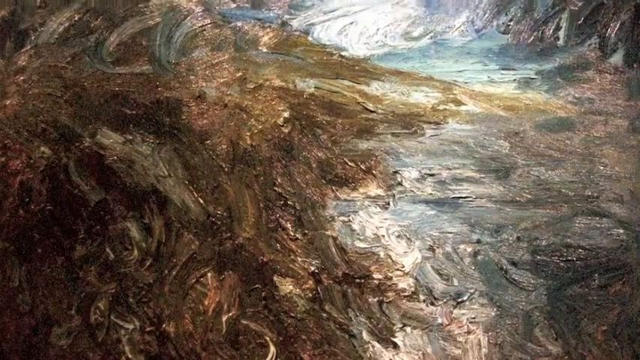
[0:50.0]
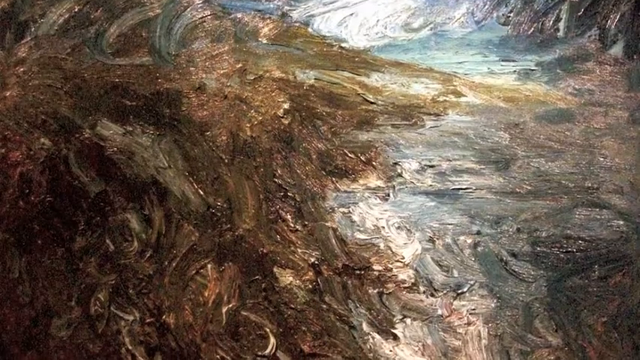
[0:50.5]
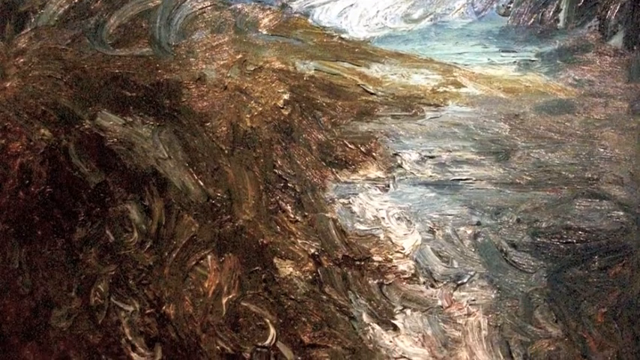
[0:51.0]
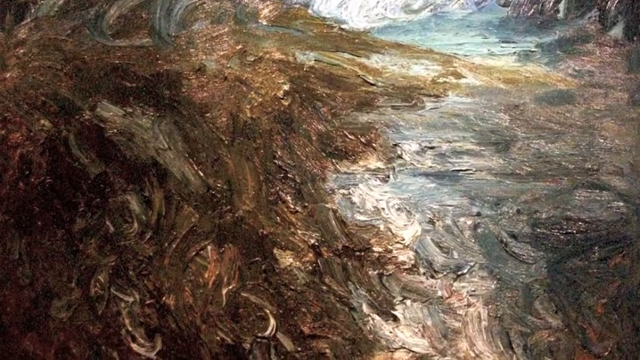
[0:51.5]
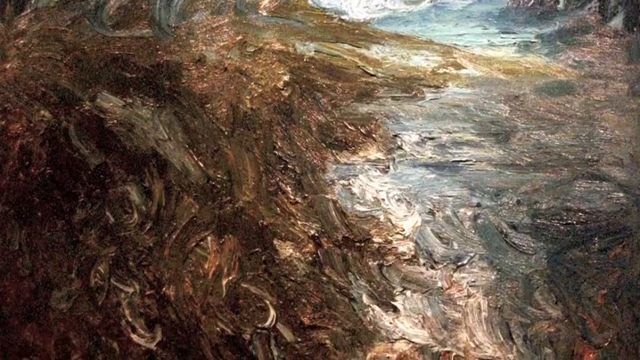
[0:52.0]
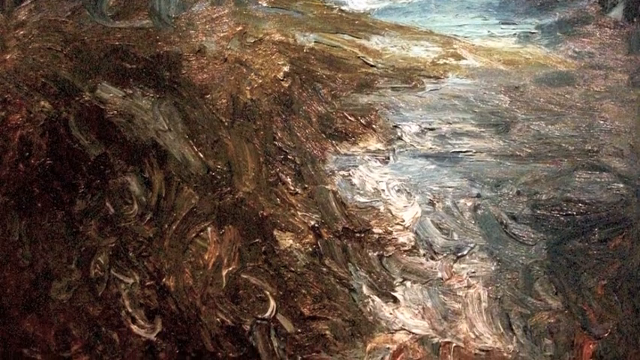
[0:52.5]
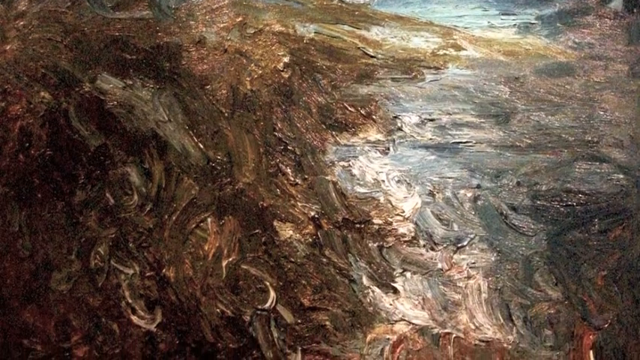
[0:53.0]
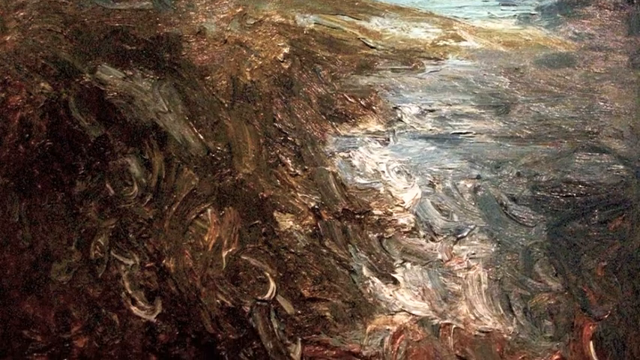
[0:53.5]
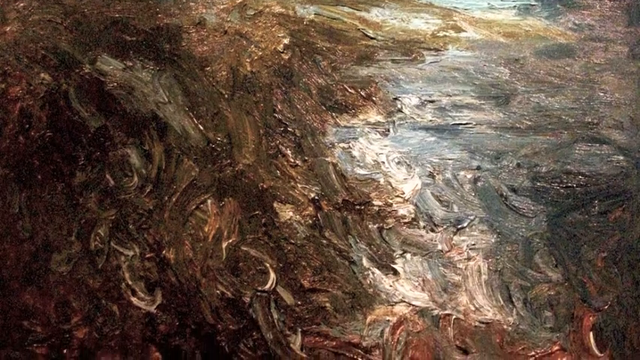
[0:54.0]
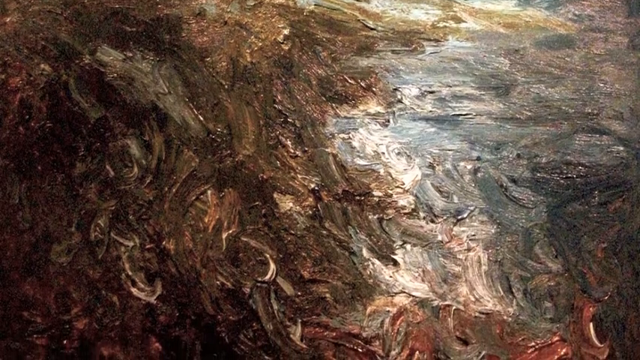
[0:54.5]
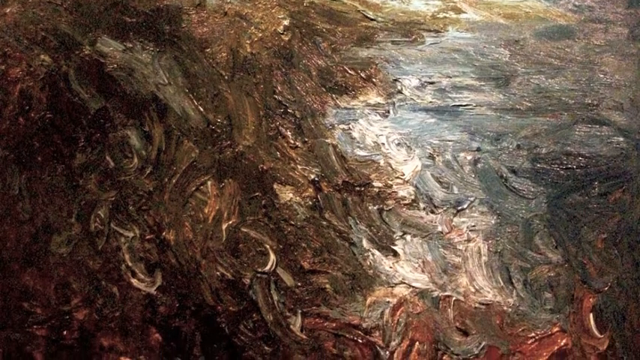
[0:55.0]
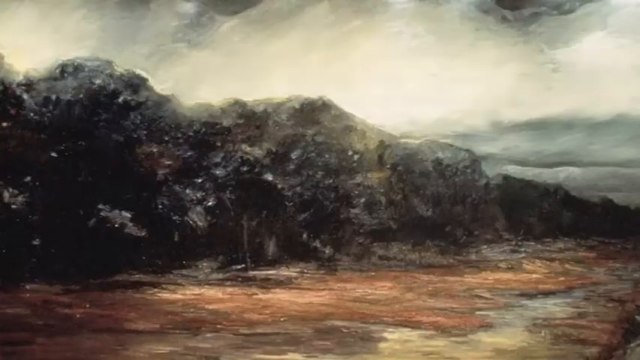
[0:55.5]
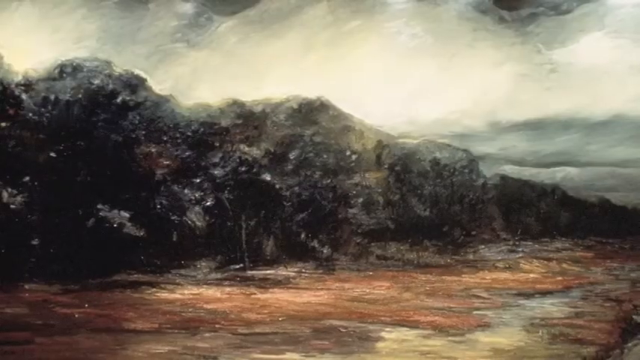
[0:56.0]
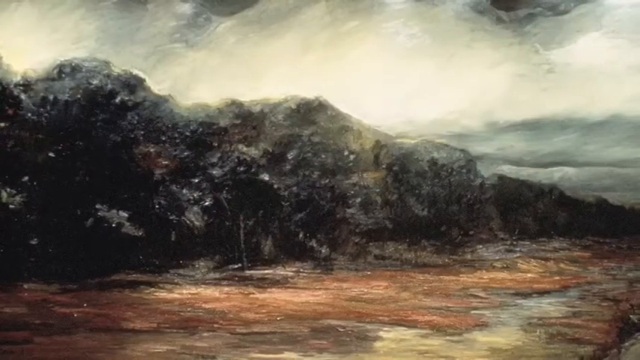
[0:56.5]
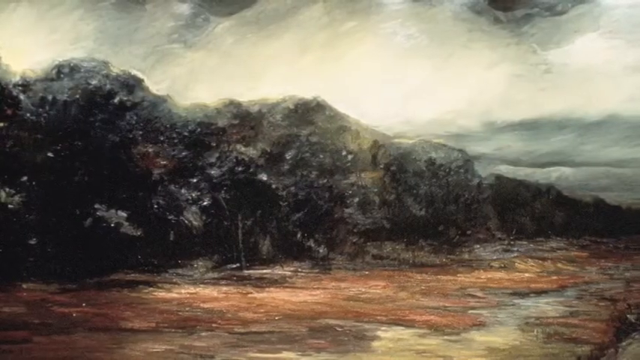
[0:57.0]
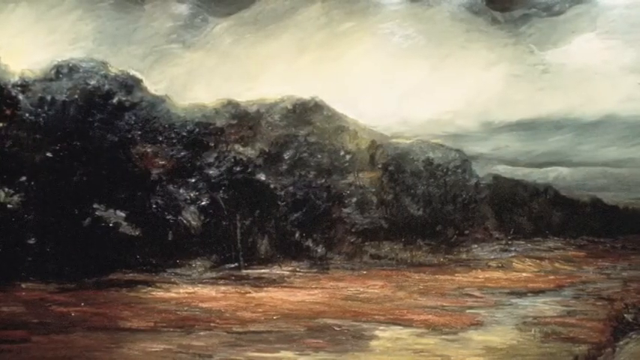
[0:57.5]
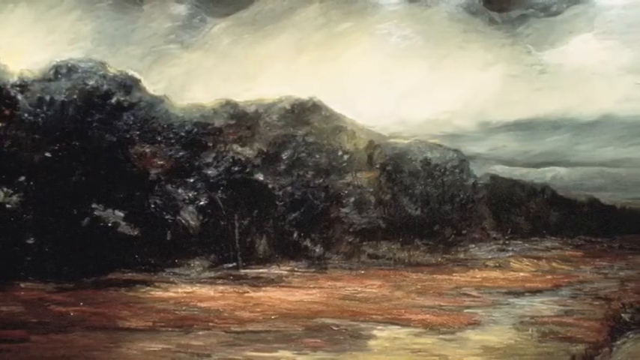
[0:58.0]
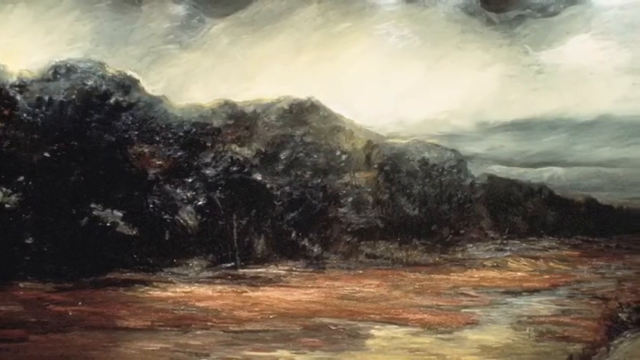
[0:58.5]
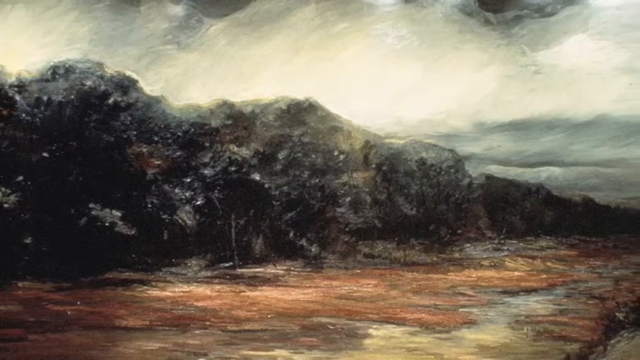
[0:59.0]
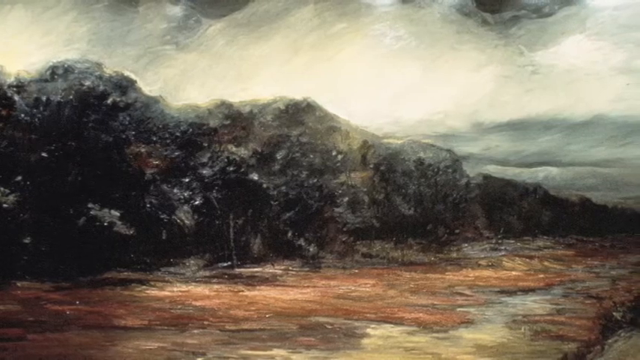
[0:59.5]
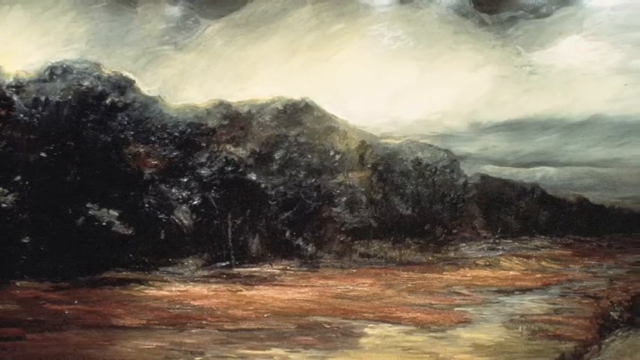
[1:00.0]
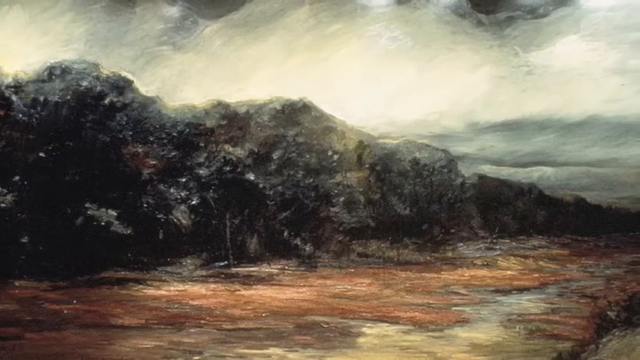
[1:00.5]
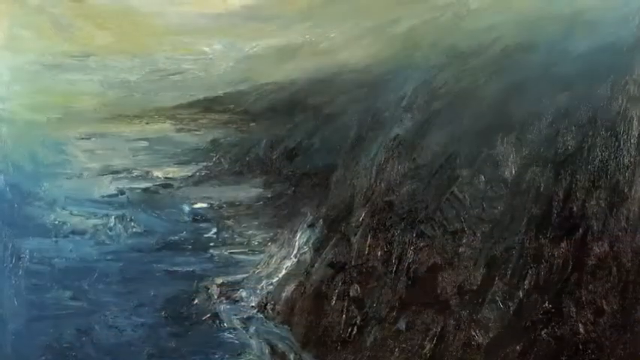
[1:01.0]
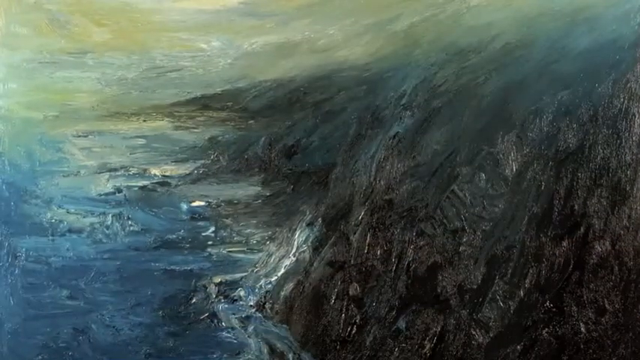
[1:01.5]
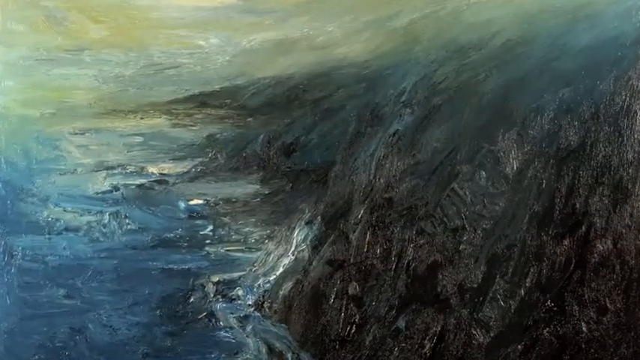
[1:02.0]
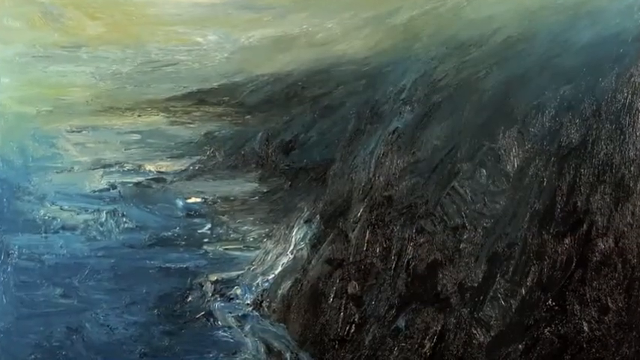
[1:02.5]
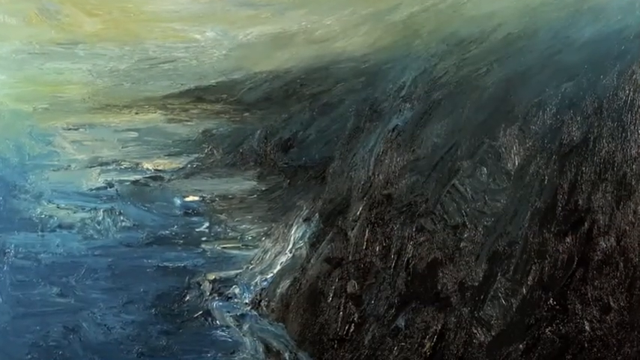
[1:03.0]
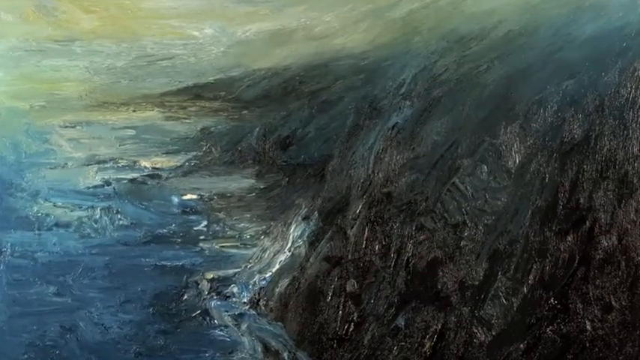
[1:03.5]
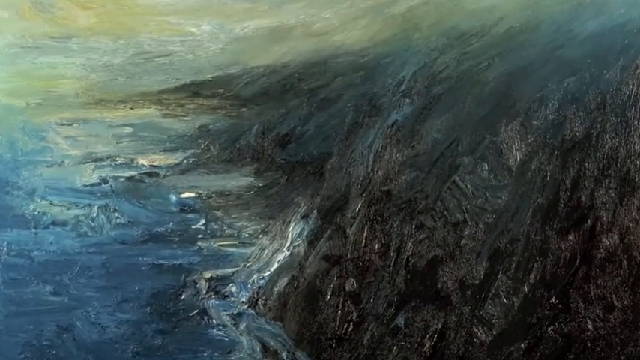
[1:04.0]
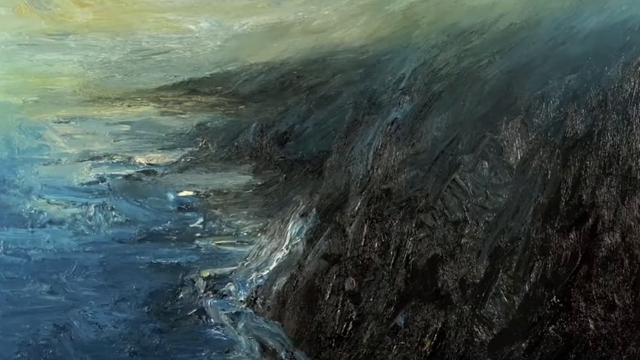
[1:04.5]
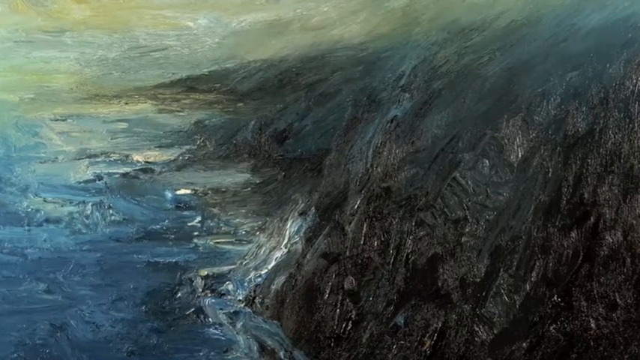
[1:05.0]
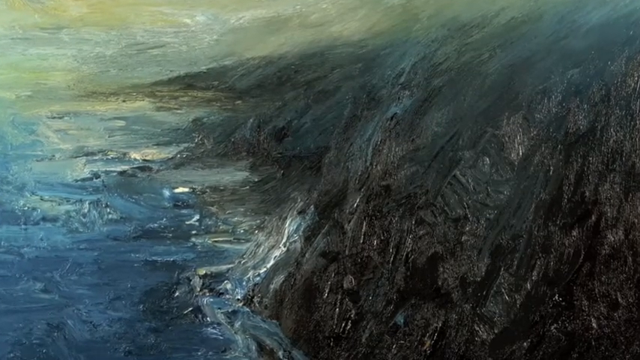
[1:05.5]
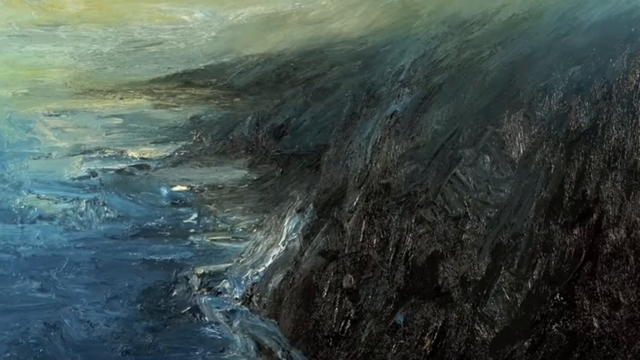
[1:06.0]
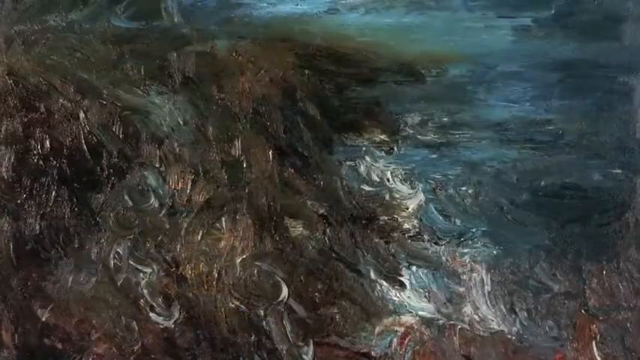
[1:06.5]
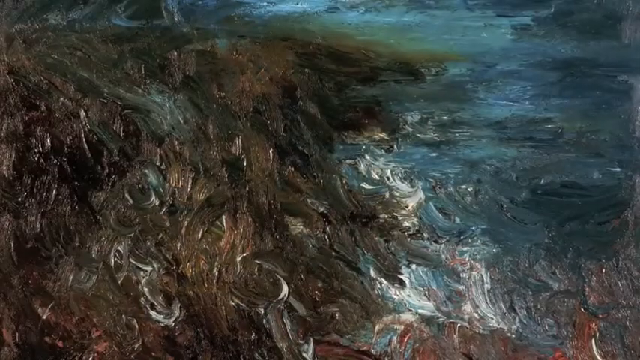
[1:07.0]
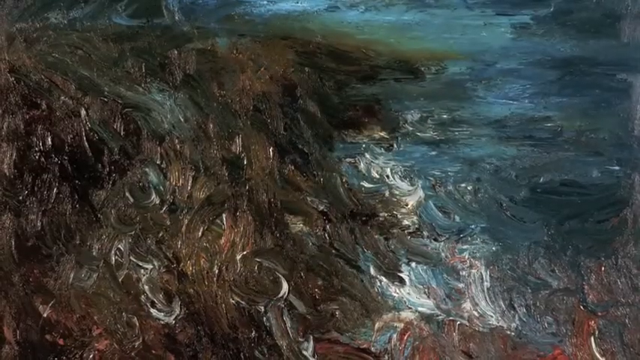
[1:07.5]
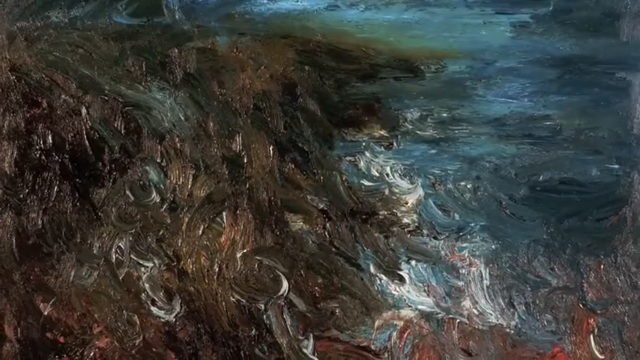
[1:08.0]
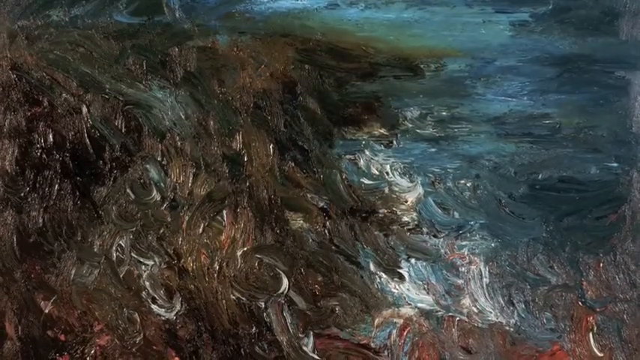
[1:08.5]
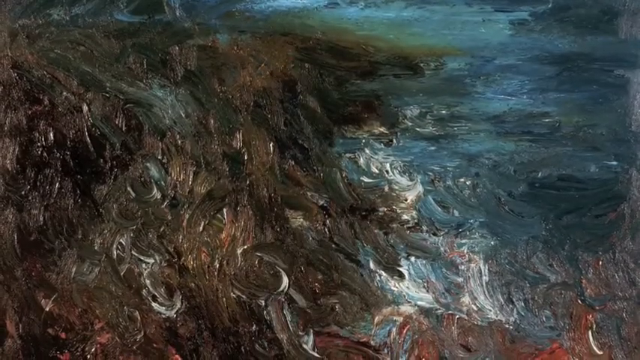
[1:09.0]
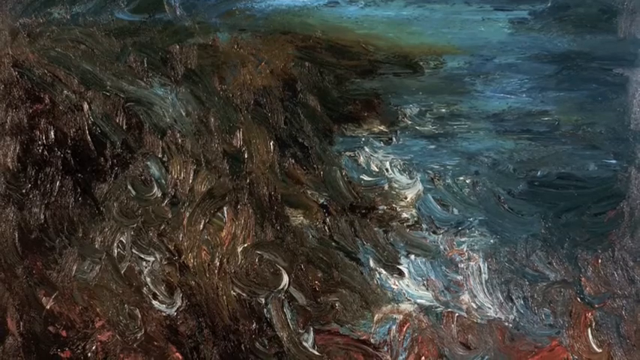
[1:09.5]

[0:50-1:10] A painting that looks goldish is shown; it is somewhat brighter than the other dark paintings. The first painting is apparently an oil painting.